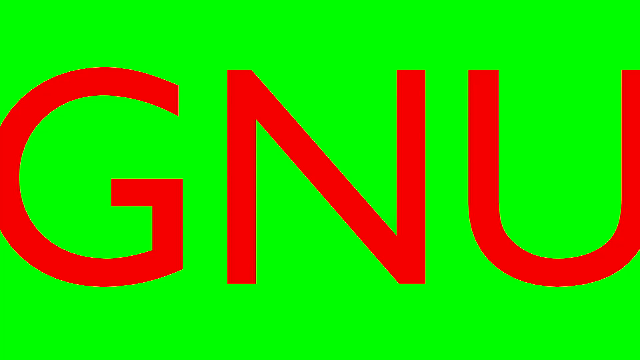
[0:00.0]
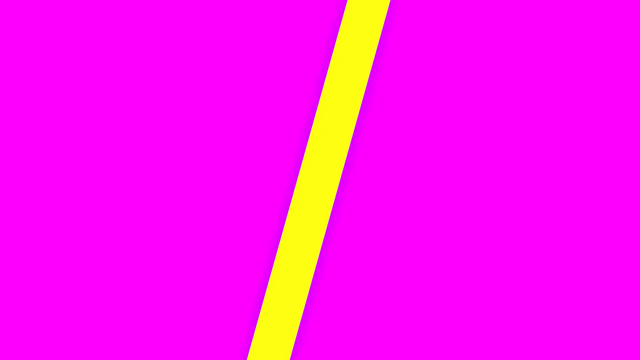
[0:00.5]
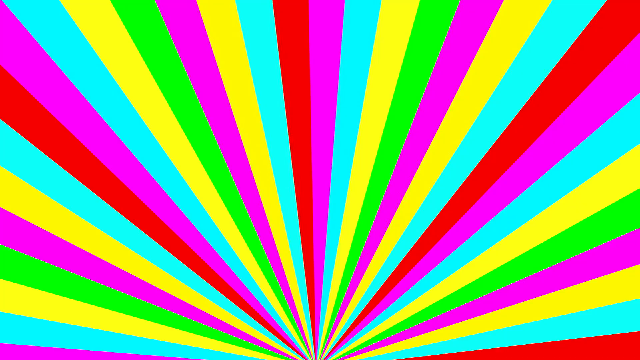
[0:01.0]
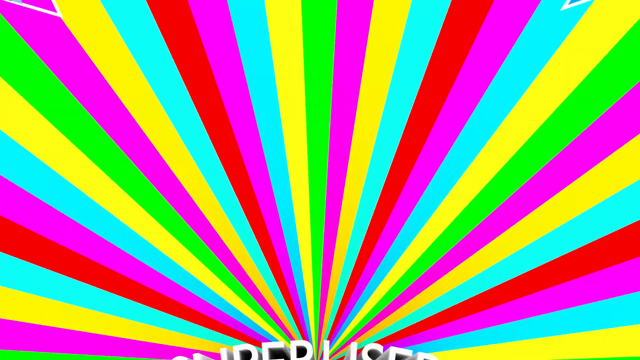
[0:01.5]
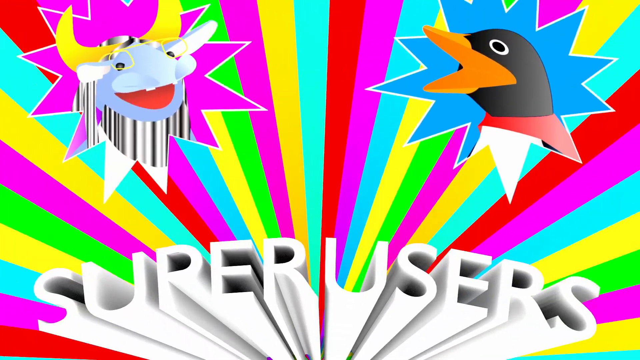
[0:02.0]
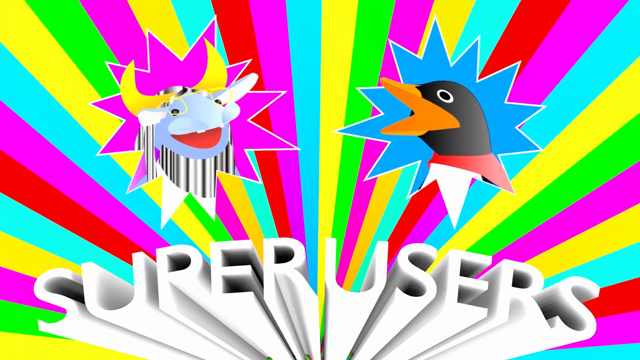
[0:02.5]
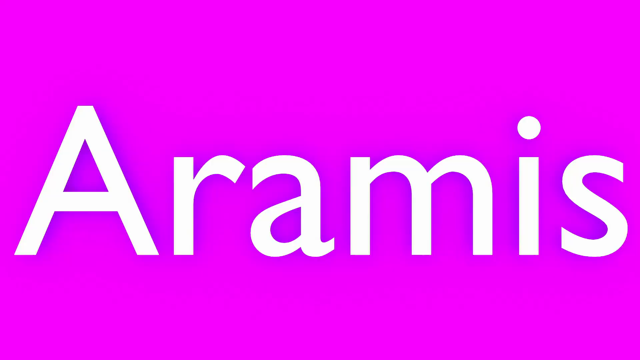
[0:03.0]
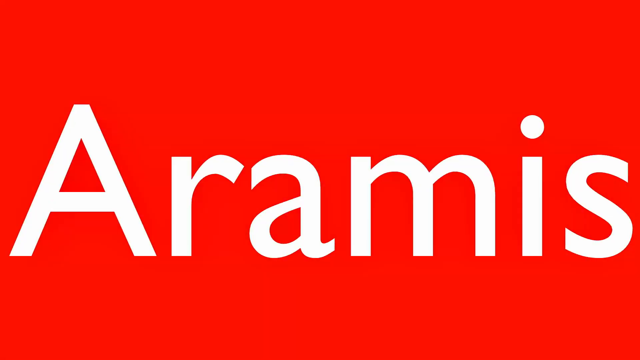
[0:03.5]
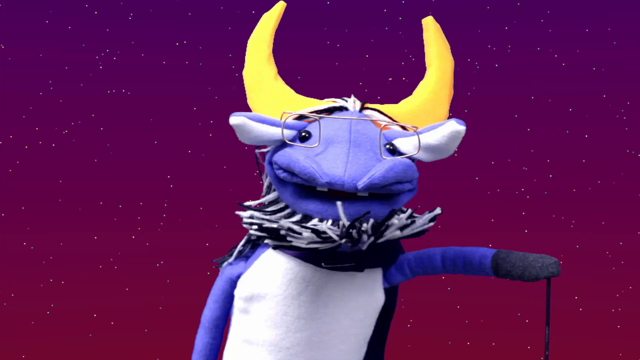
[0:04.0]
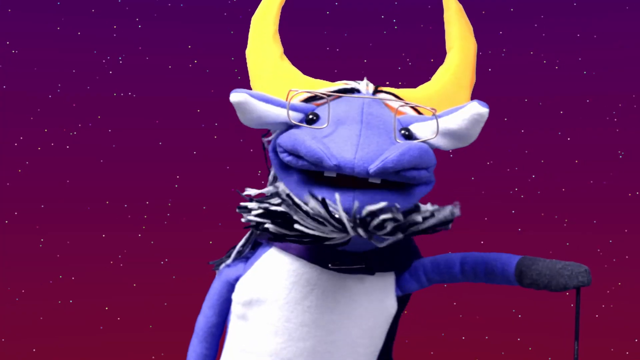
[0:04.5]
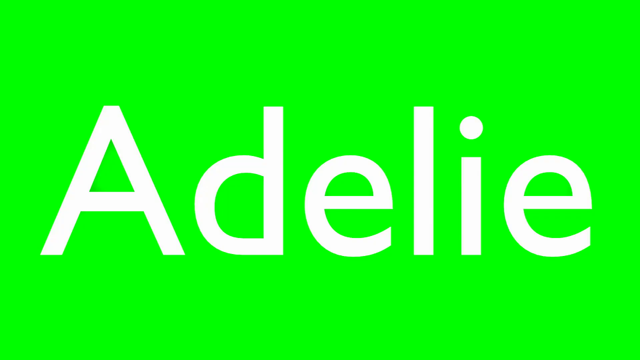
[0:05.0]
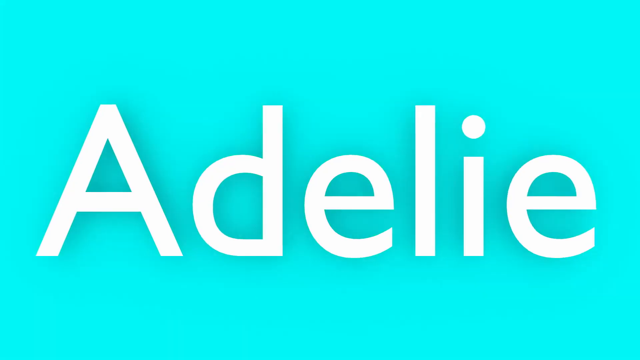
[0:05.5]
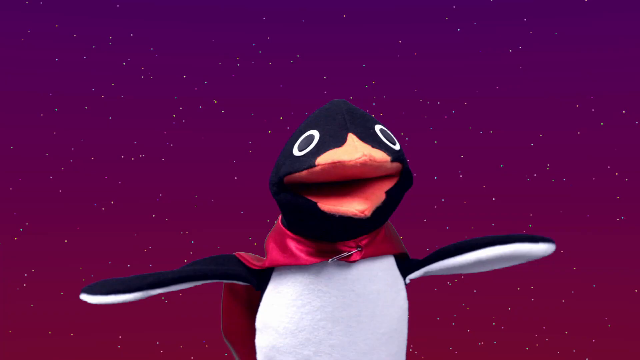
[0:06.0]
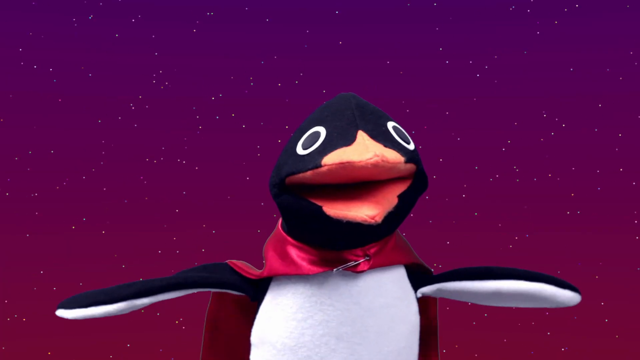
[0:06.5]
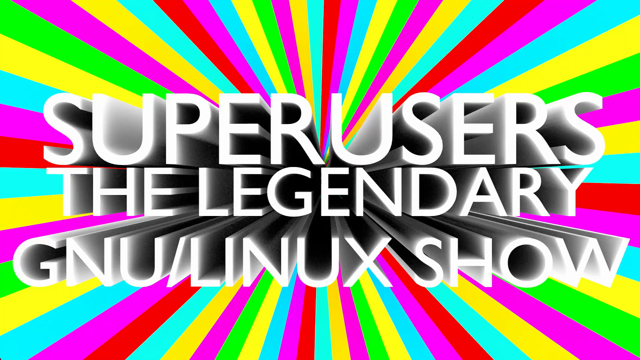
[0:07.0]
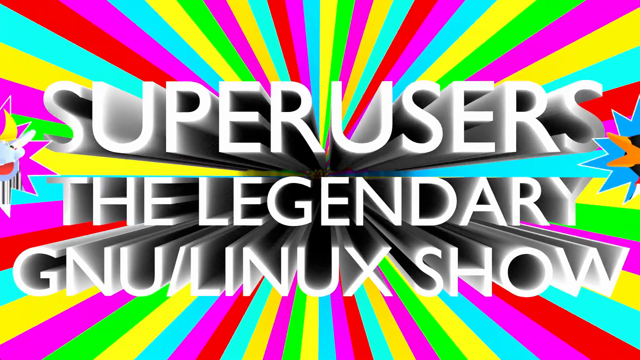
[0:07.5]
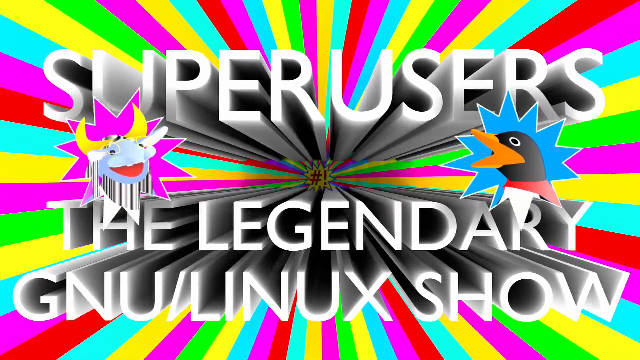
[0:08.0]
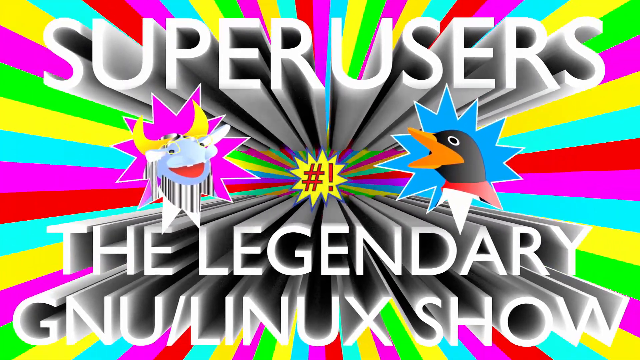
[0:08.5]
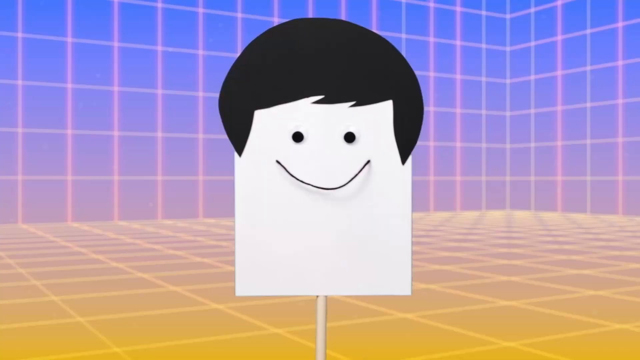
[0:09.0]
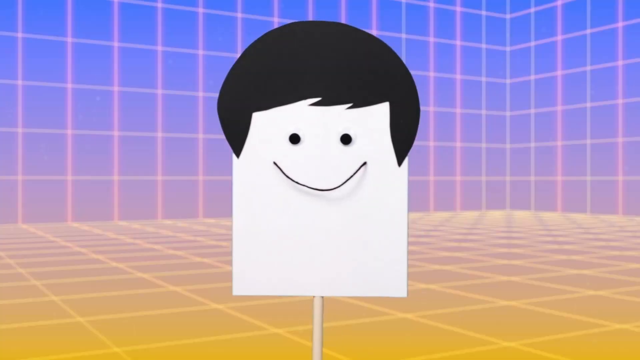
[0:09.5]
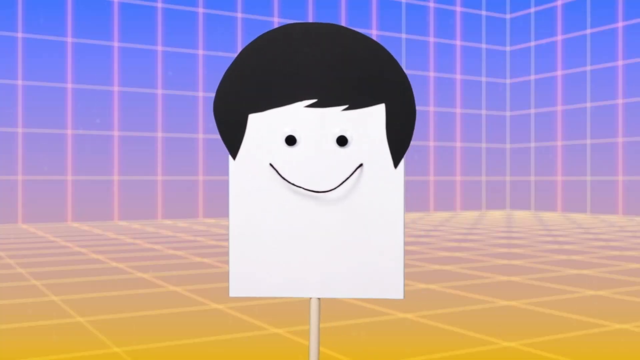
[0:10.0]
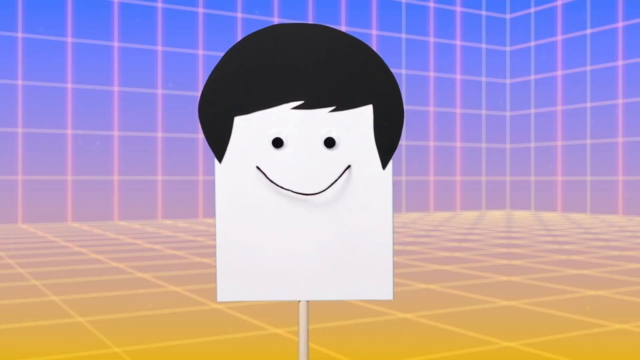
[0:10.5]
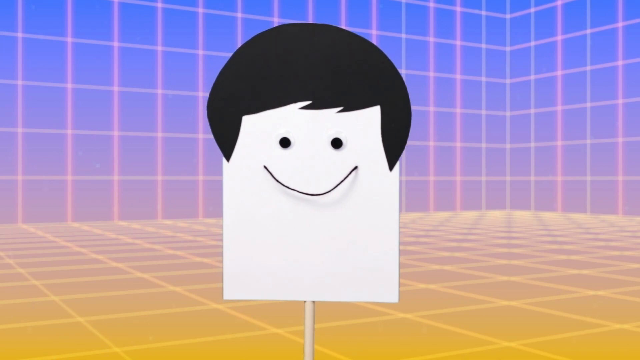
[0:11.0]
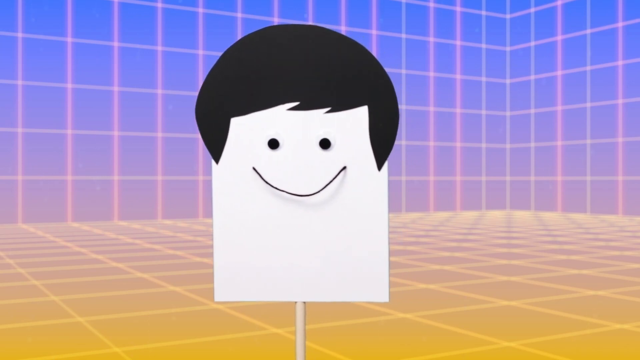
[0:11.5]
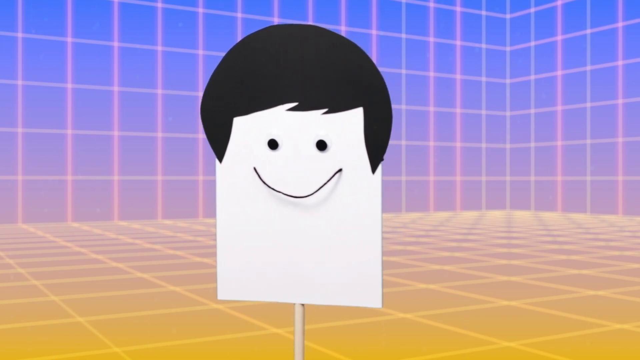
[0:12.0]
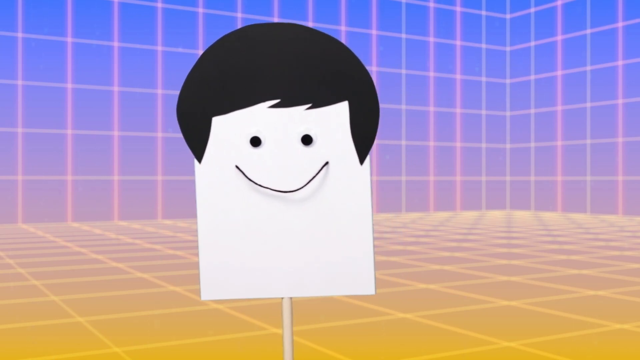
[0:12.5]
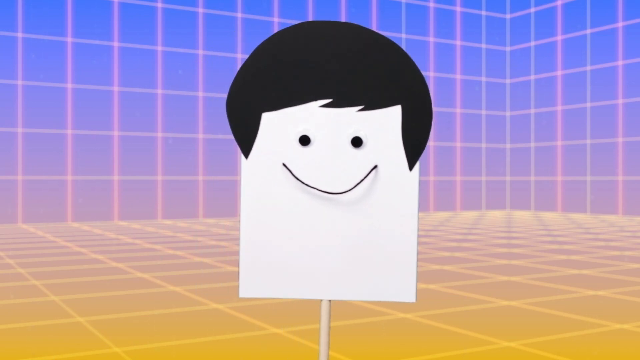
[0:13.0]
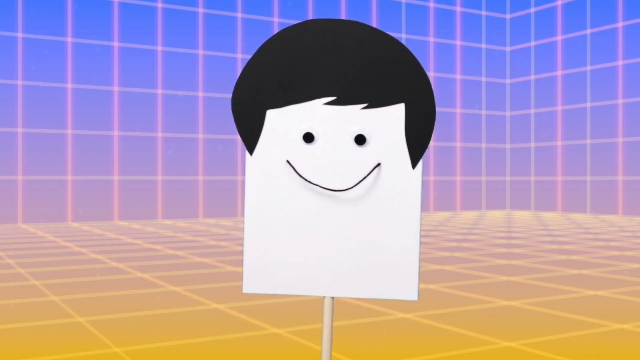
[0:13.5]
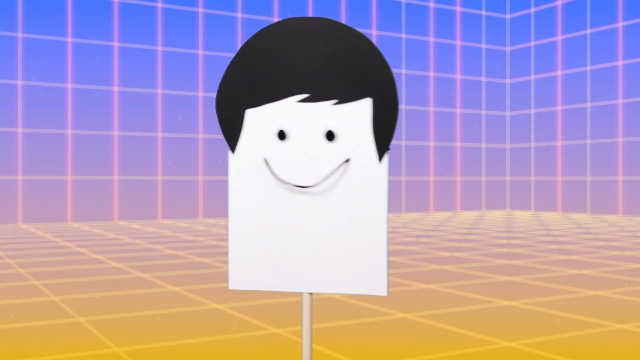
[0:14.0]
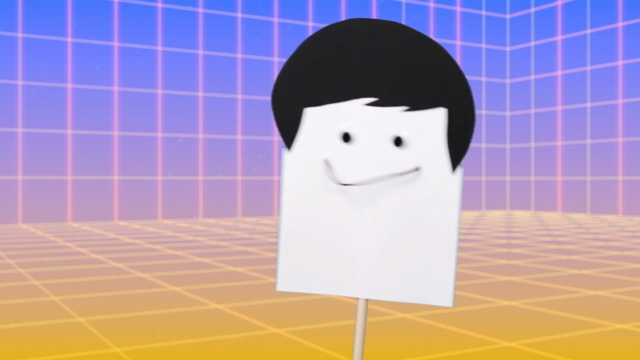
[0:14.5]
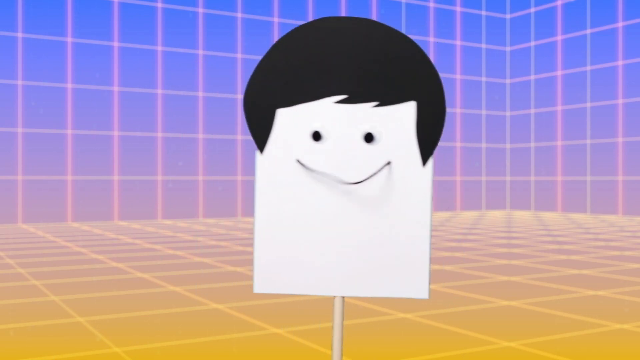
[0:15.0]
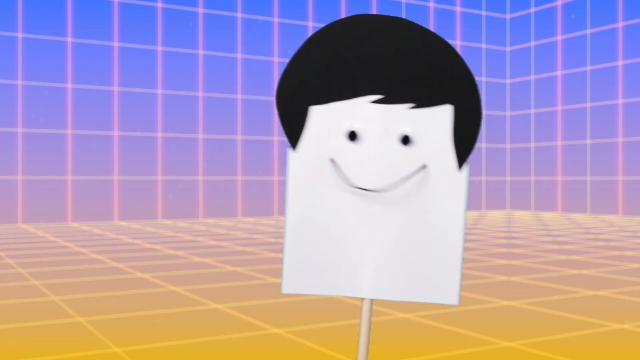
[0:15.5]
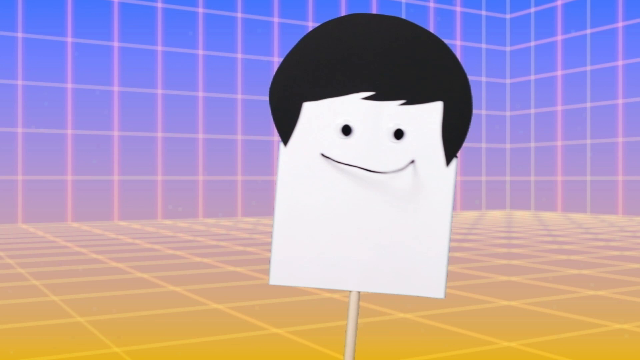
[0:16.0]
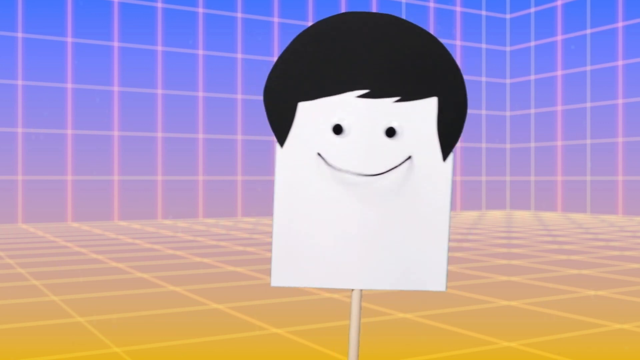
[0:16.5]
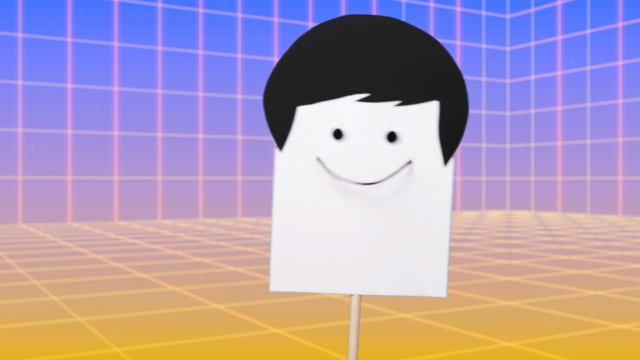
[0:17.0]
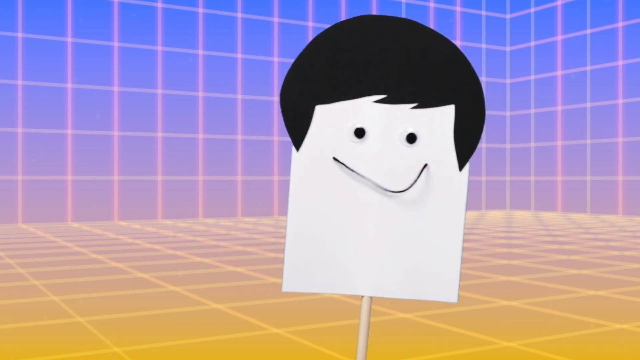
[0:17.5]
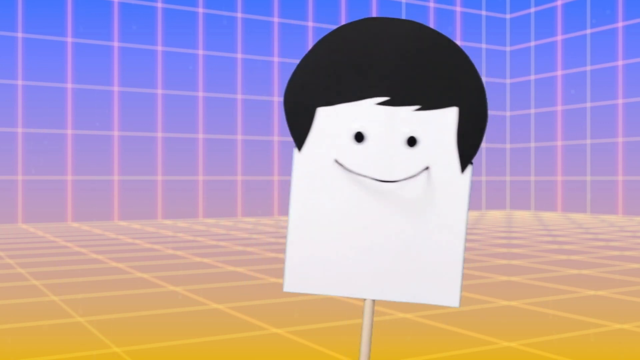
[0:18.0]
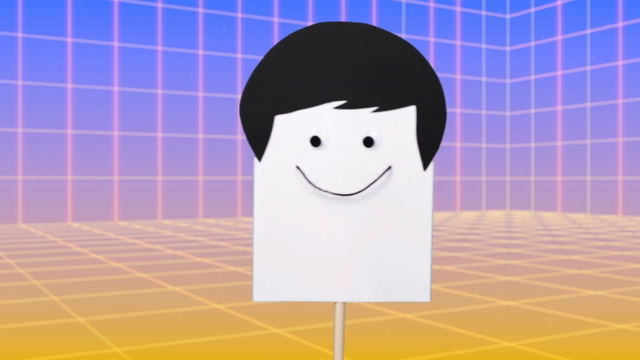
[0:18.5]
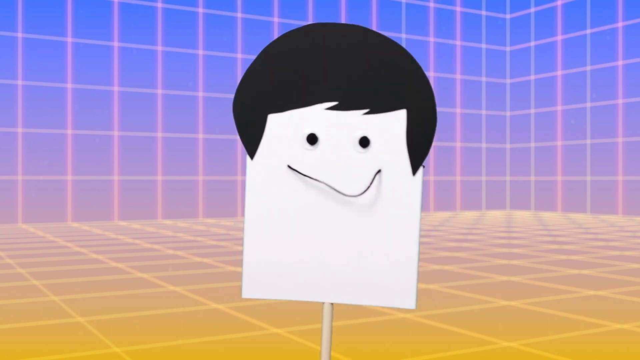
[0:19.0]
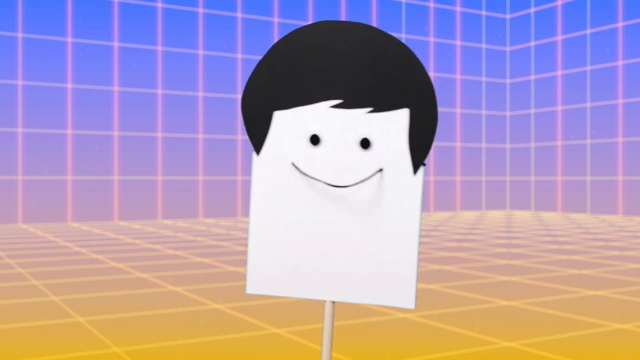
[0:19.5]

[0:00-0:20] The video opens with the letters G and U, red and in all capitals, filling the whole screen on a bright green background. The background turns purple and then yellow, and in light blue text over the yellow appears the word "Linux". Next, a rainbow of colors radiates from the bottom center of the screen, the rays rotating counterclockwise, with white text at the bottom reading "super users". A purple screen with some white letters on it follows, fading to different colors. Then what looks like a puppet appears; it looks like an animal, though it is difficult to say what kind. It has yellow horns coming off its head and is purple and white. Next comes a penguin puppet wearing a red cape held on at the front with a safety pin. White text reads "super users, the legendary GNU Linux show".